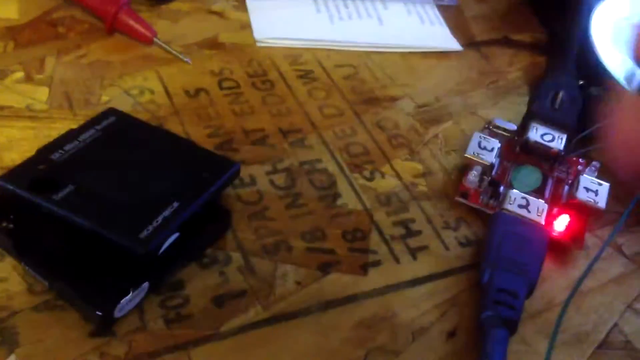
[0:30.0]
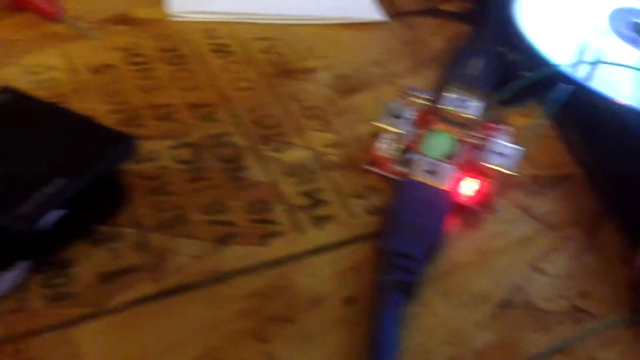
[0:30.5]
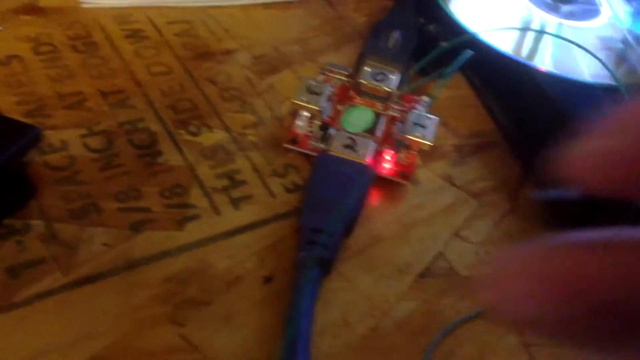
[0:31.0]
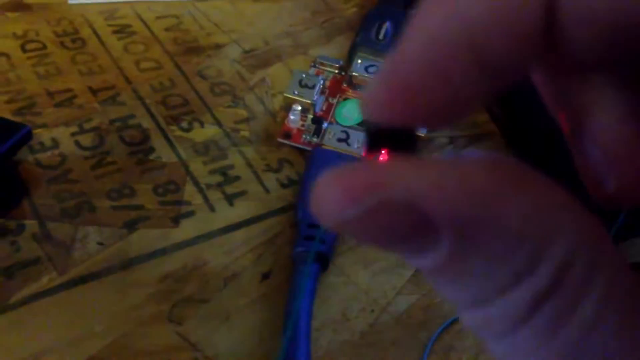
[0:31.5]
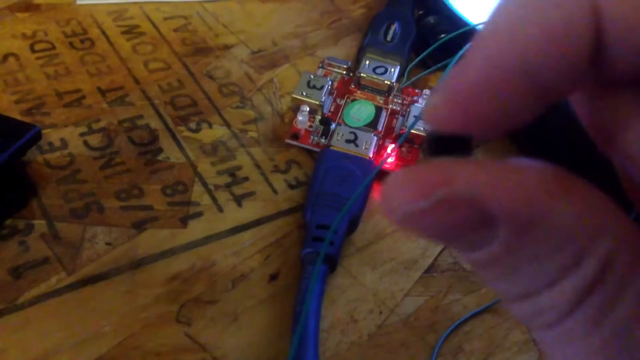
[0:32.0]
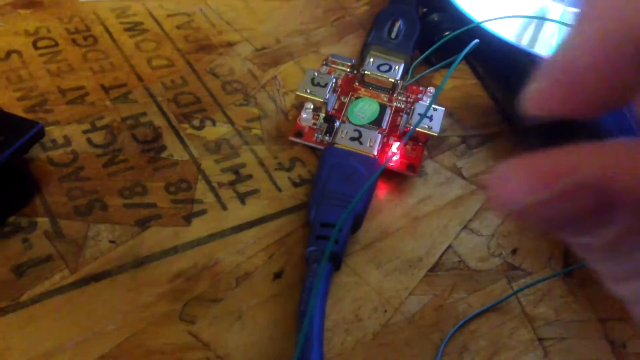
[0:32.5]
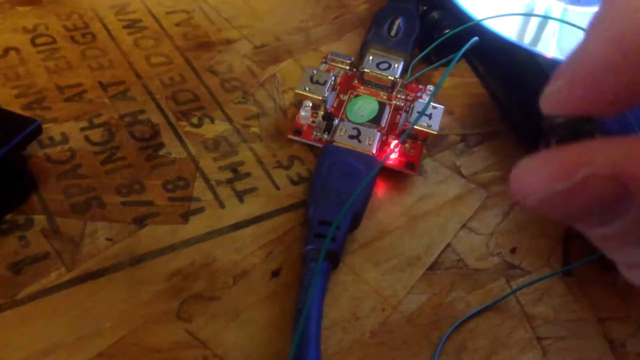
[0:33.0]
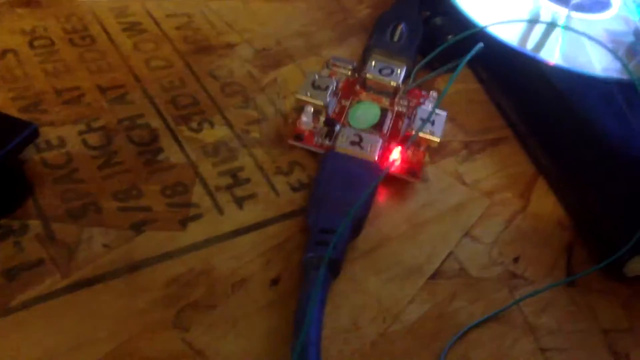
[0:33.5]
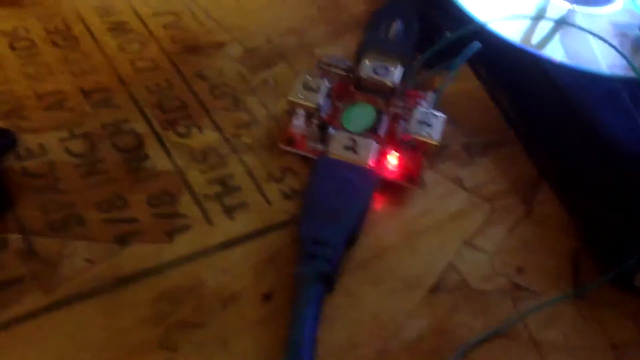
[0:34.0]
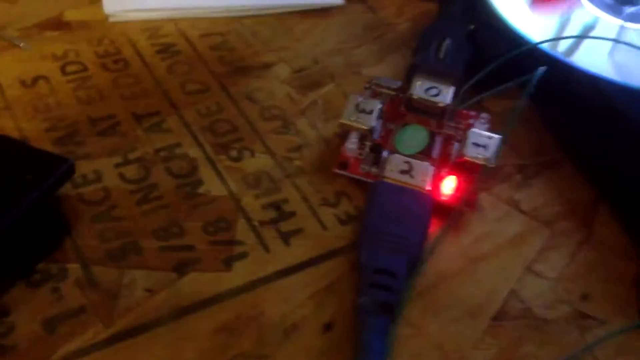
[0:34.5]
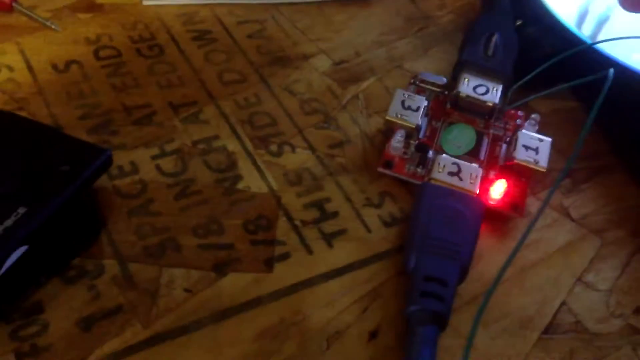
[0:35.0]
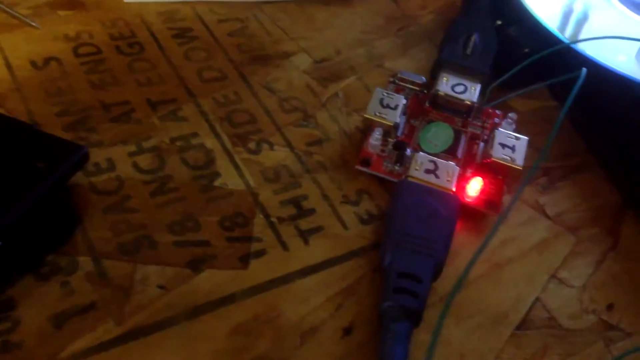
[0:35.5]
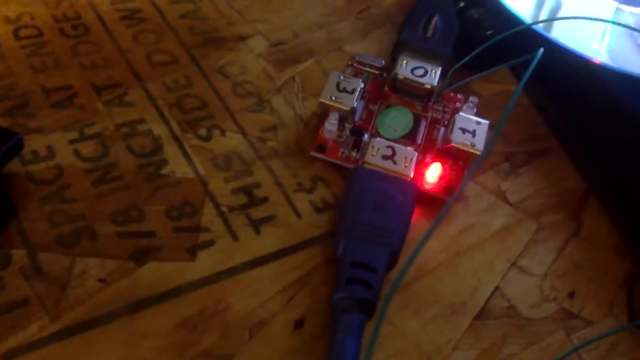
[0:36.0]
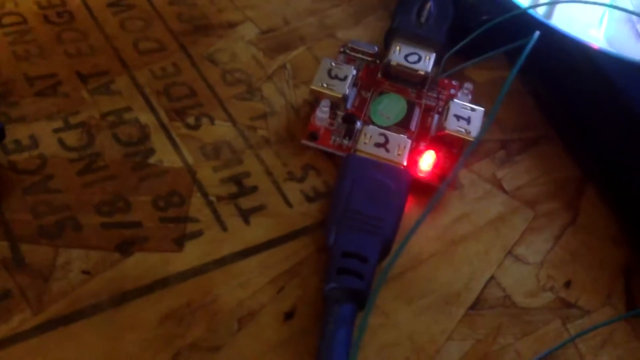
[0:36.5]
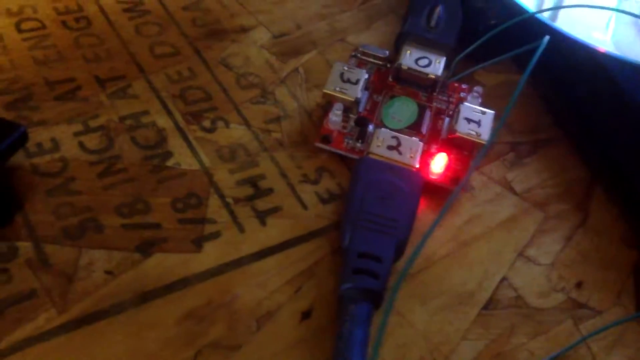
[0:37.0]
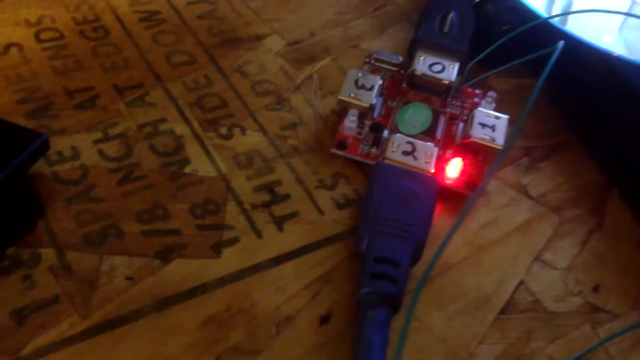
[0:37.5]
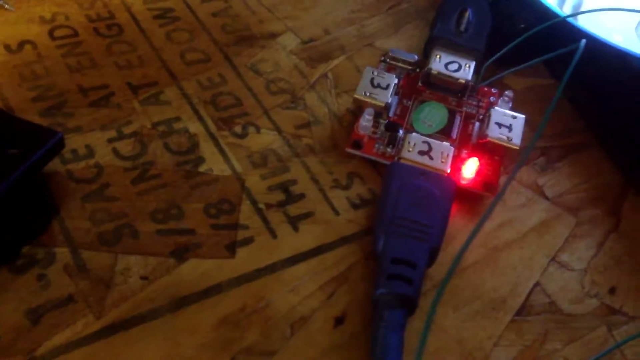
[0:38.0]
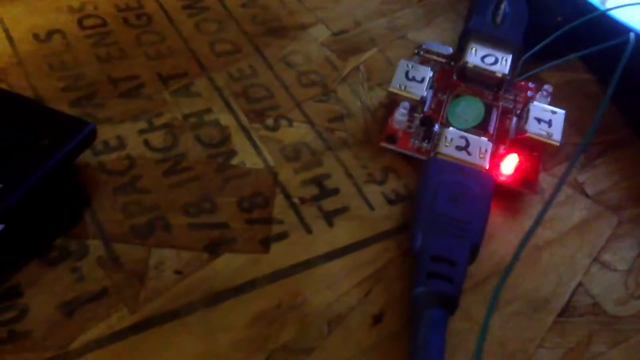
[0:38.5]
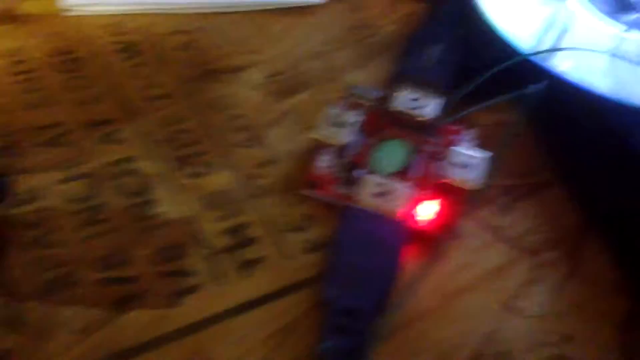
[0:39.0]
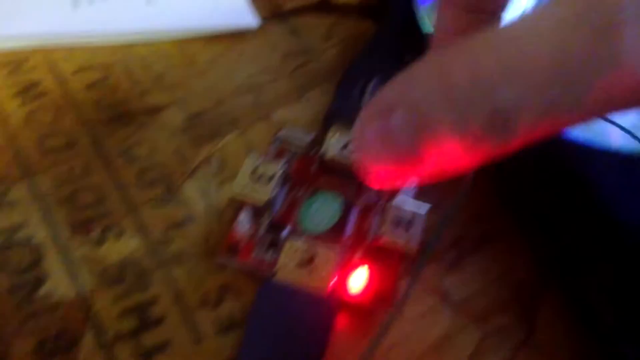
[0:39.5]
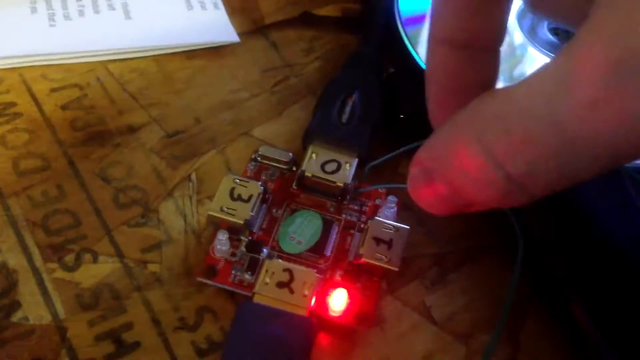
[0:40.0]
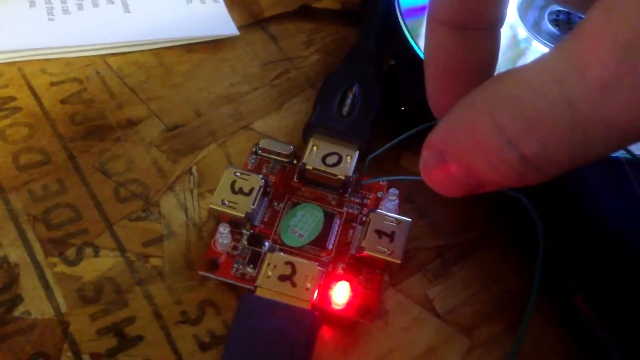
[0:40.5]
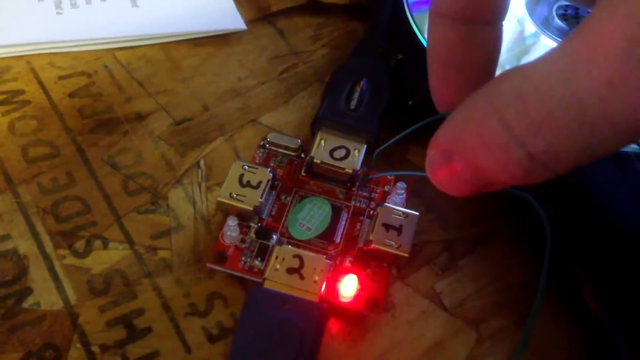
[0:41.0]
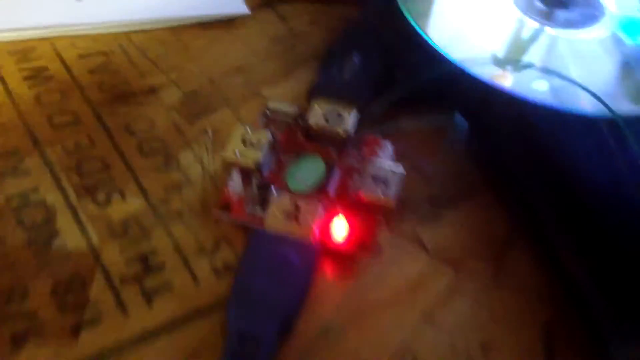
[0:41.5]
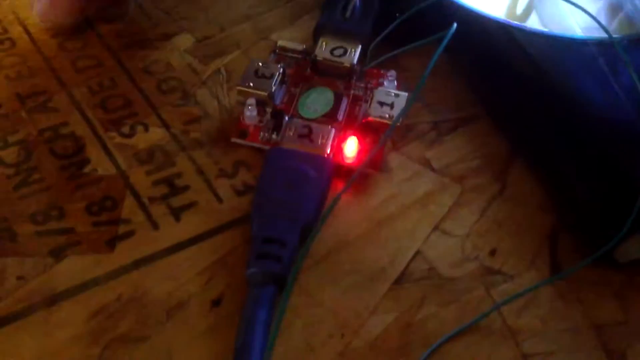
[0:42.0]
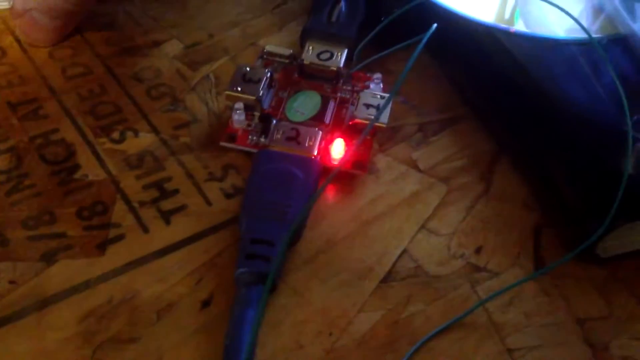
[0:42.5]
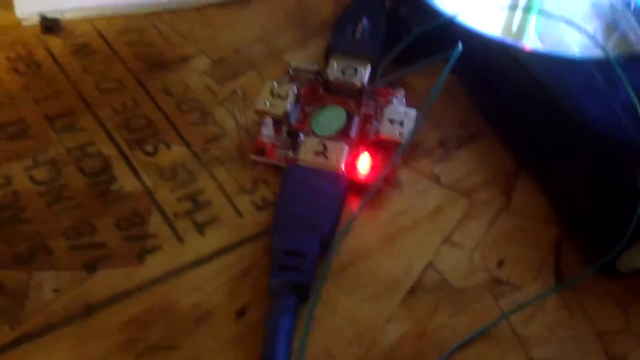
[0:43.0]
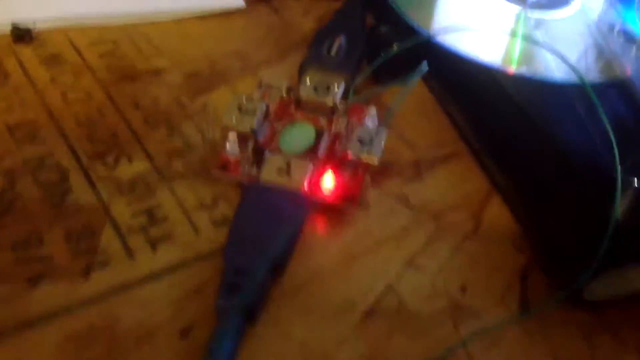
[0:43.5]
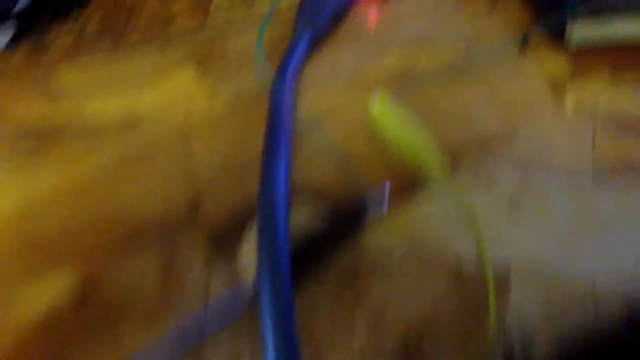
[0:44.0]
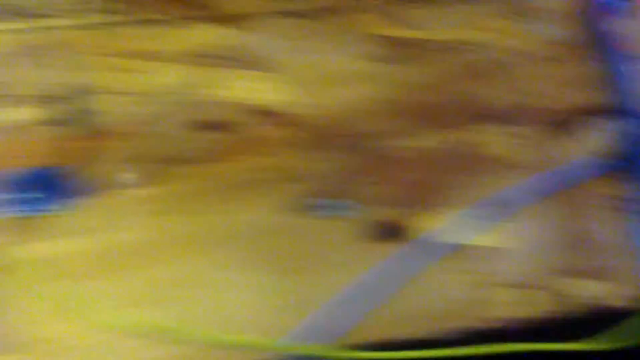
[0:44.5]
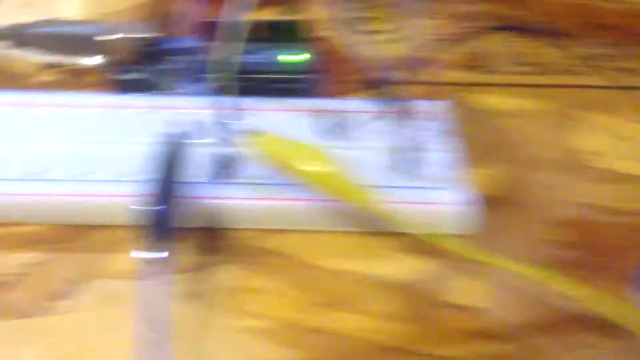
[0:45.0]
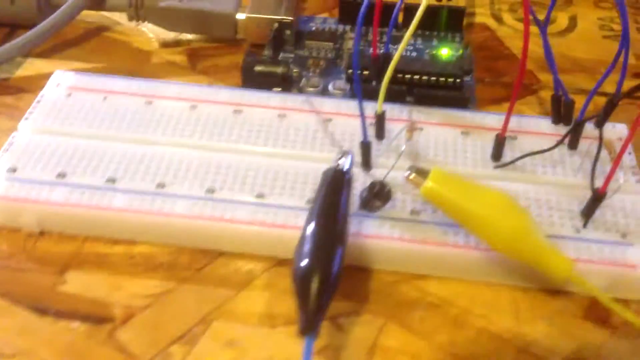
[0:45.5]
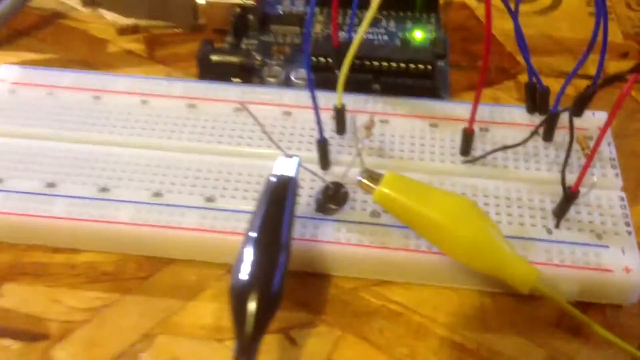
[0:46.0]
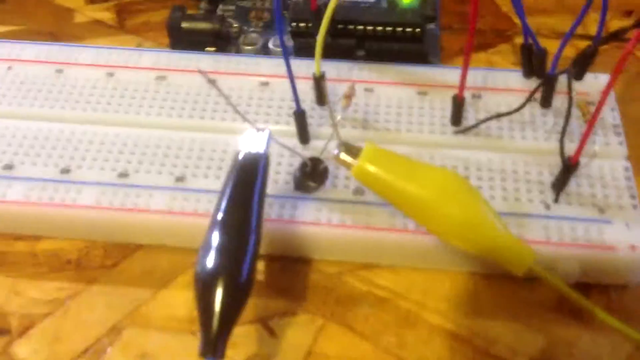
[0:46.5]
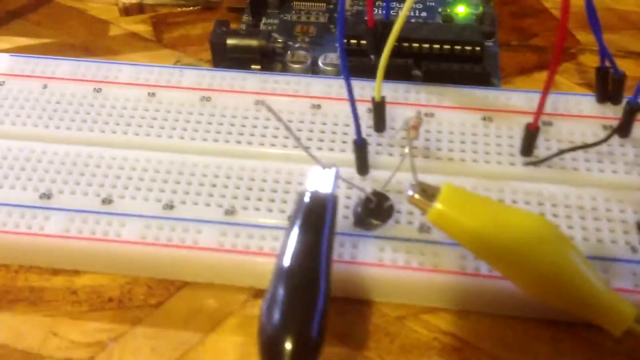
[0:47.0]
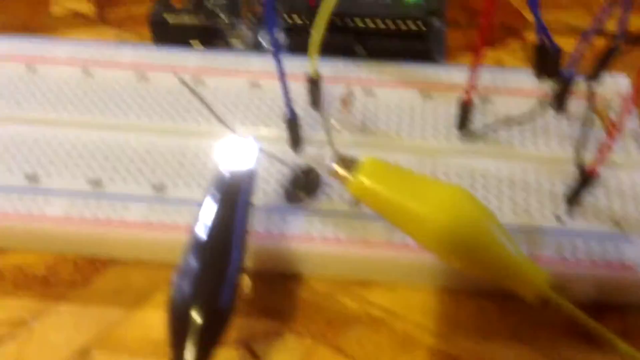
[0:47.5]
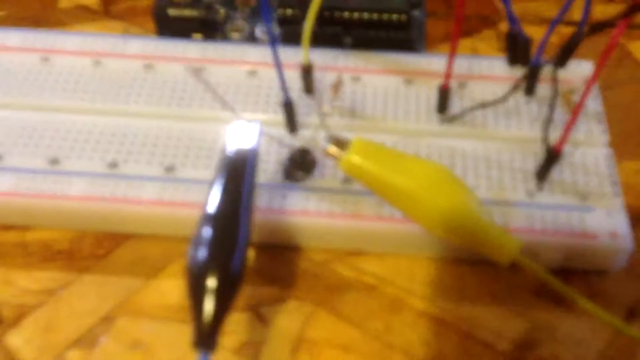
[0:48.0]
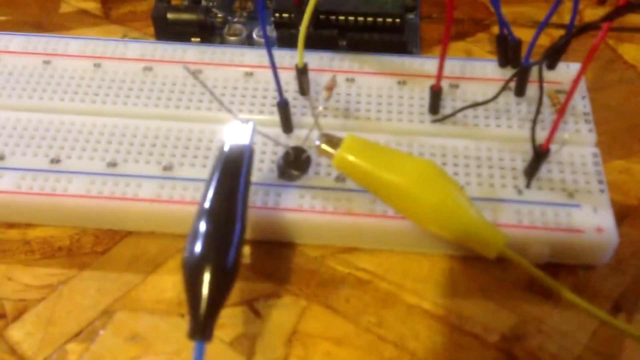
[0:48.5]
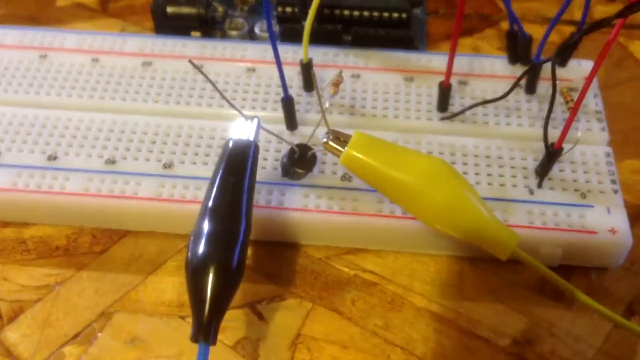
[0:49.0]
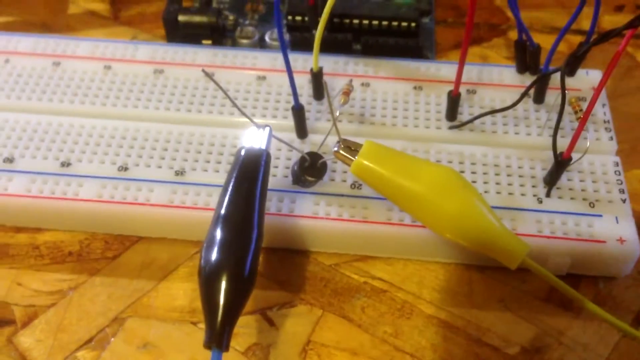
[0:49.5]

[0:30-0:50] A small electric panel device on the brown table has the numbers 0123 on it. Also on the table are a screwdriver, something like a cartridge, paper and a CD disc. A person holds a small device in their hand. Tiny cables are connected to the device with the numbers 0123, and the cable is connected to what is probably an electrical connector device on the table that looks like a multi-socket.